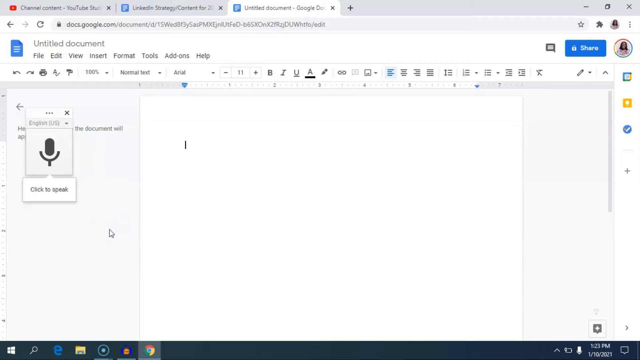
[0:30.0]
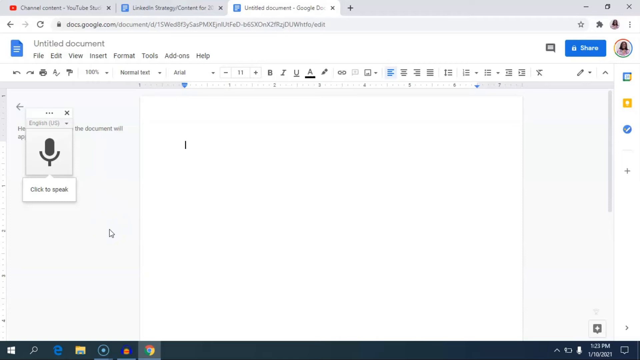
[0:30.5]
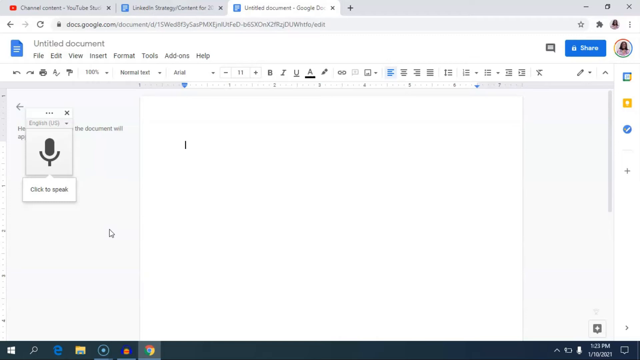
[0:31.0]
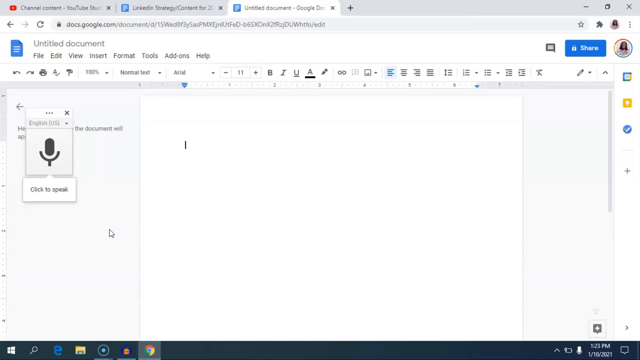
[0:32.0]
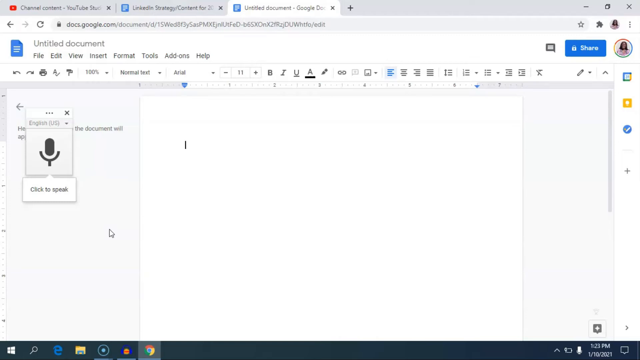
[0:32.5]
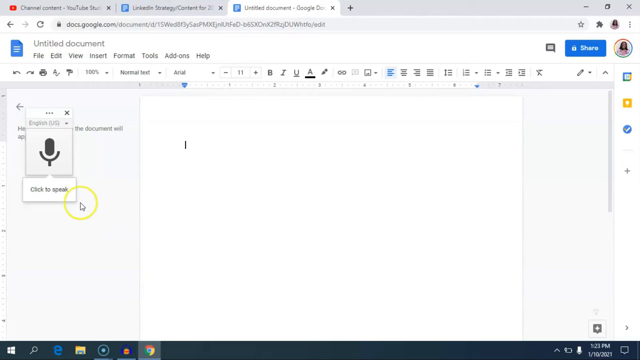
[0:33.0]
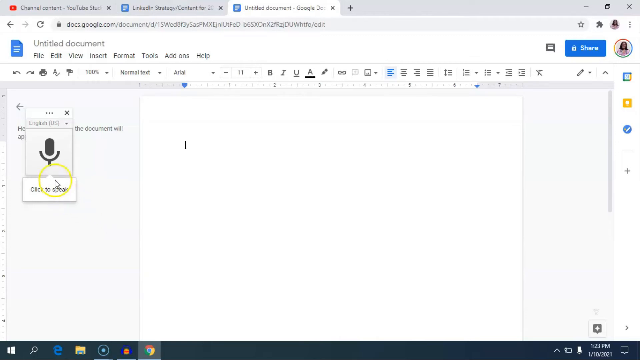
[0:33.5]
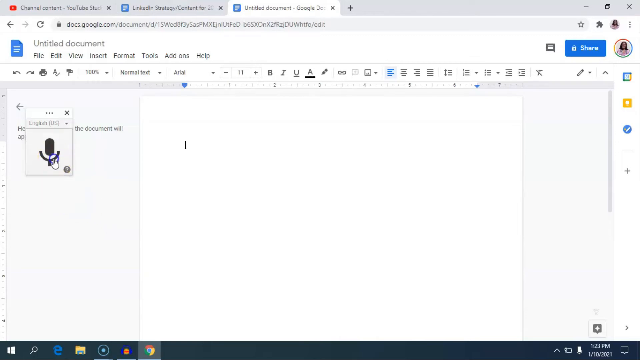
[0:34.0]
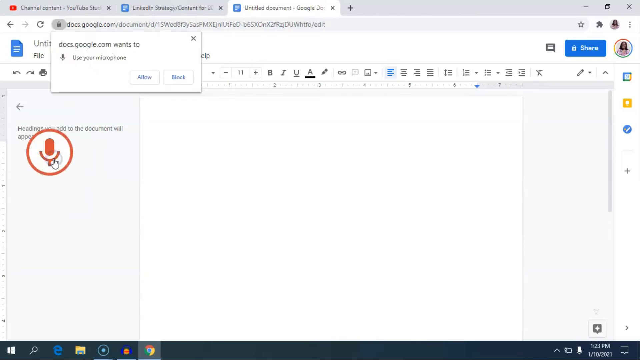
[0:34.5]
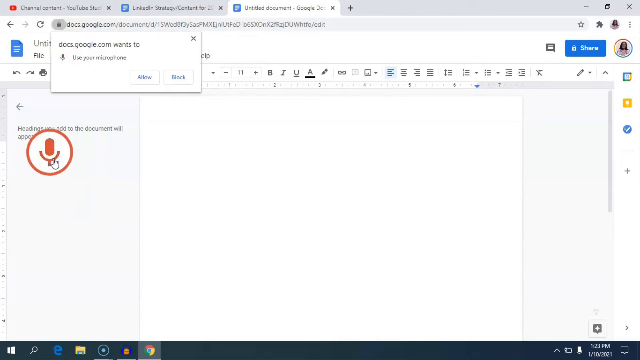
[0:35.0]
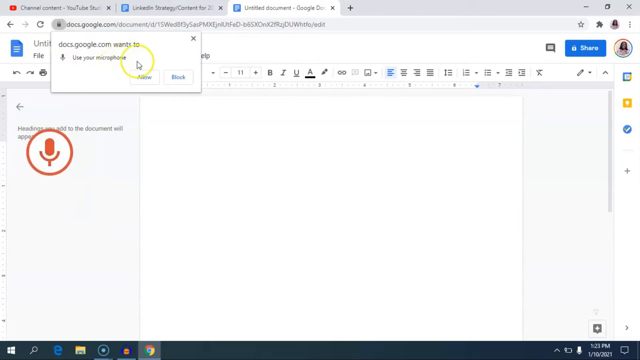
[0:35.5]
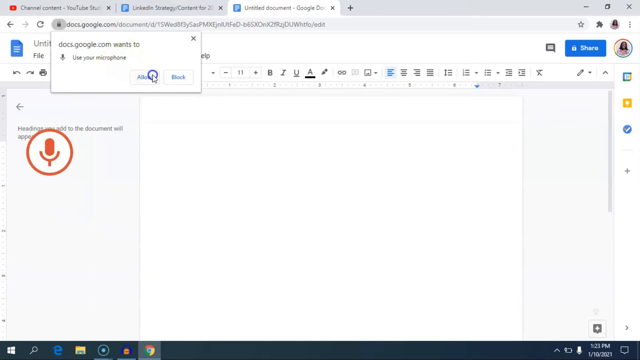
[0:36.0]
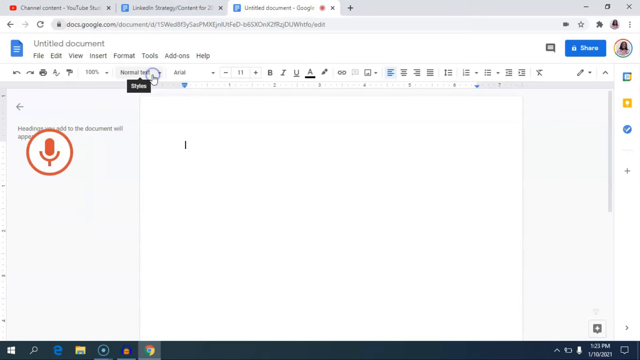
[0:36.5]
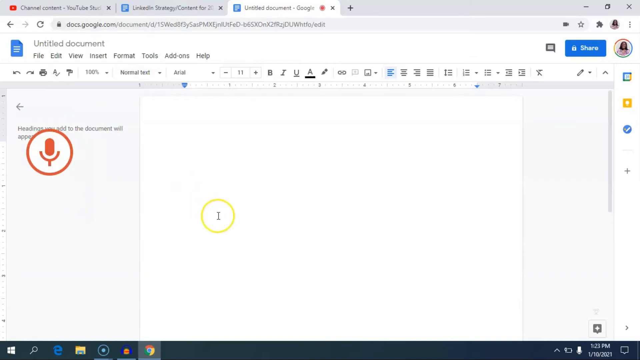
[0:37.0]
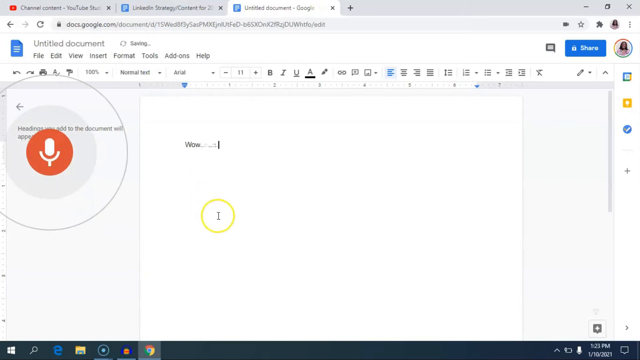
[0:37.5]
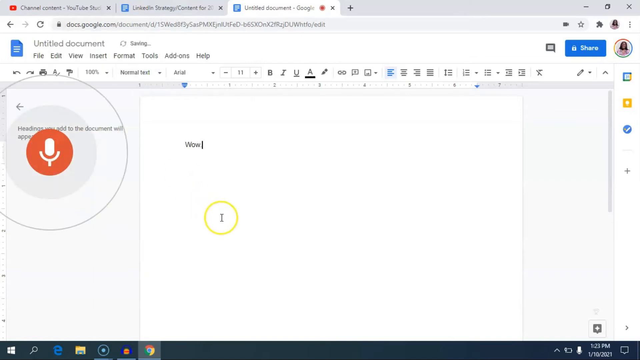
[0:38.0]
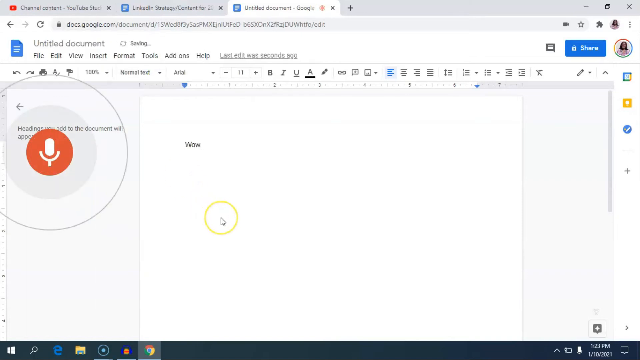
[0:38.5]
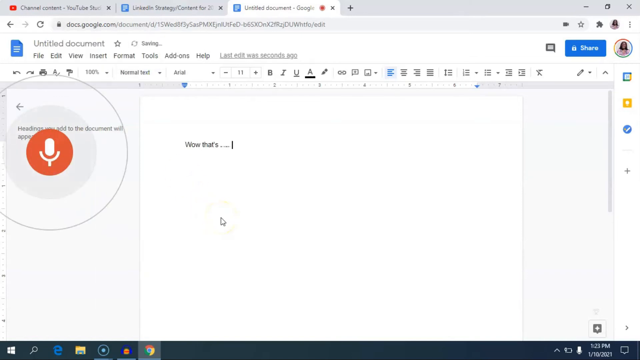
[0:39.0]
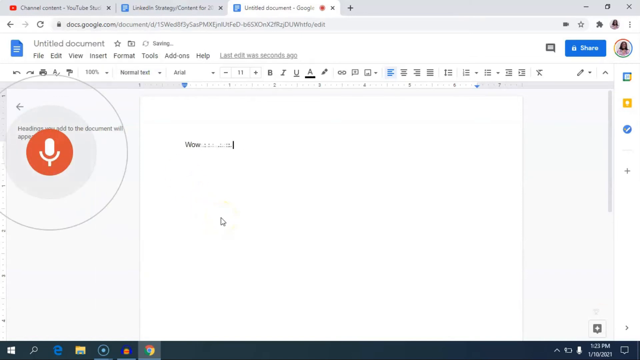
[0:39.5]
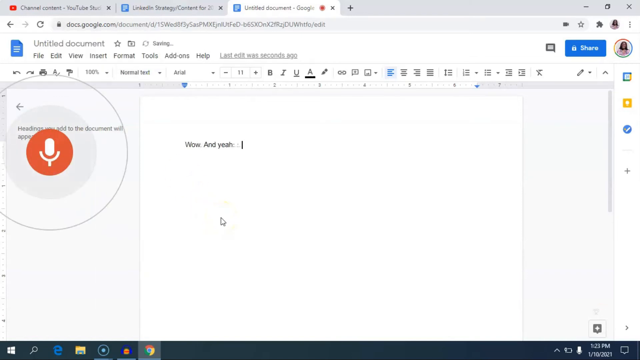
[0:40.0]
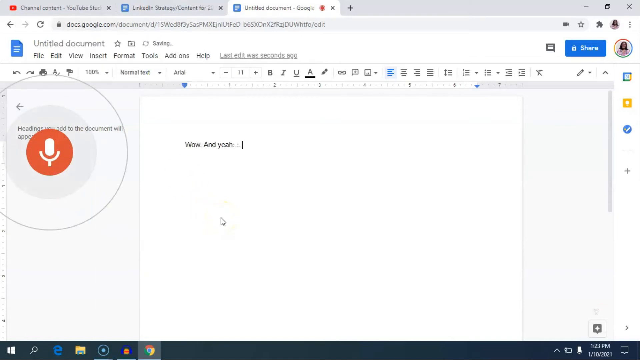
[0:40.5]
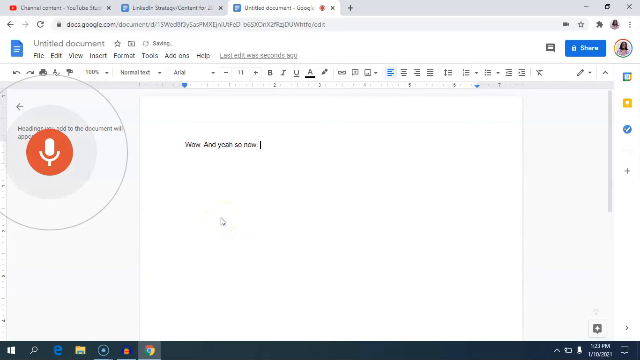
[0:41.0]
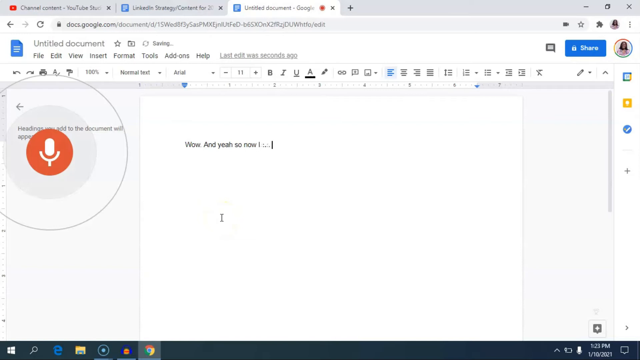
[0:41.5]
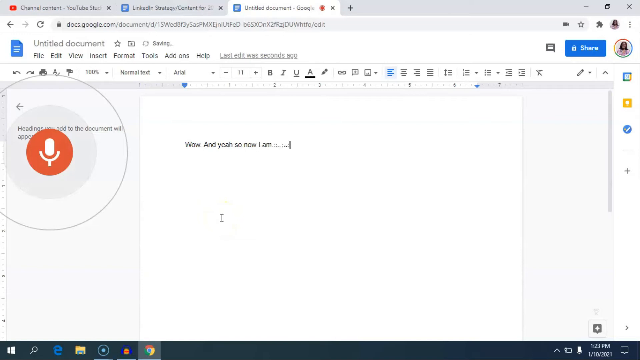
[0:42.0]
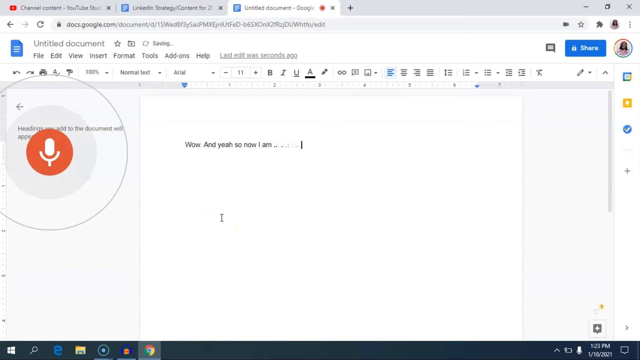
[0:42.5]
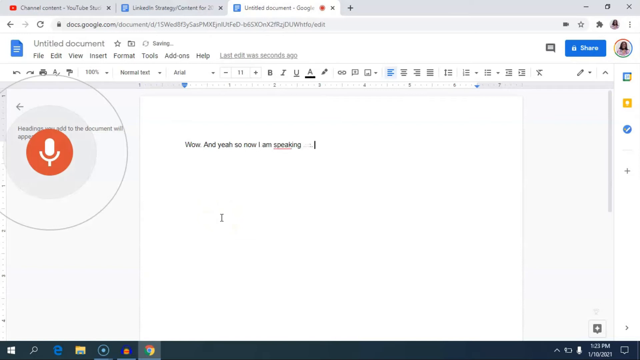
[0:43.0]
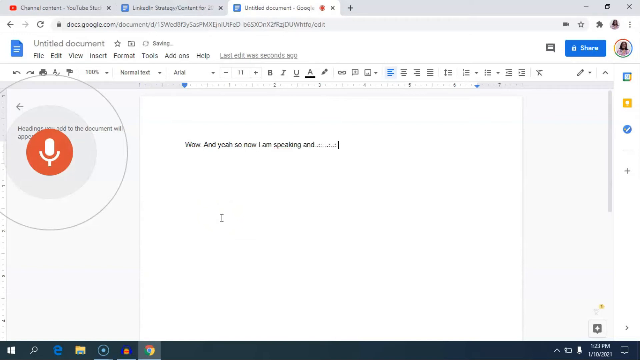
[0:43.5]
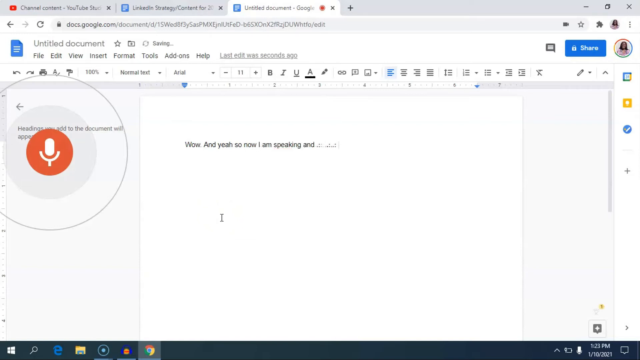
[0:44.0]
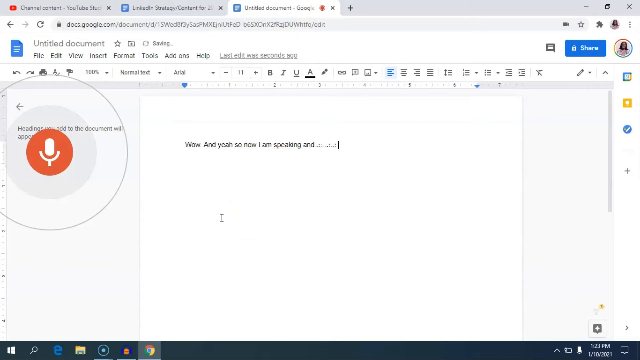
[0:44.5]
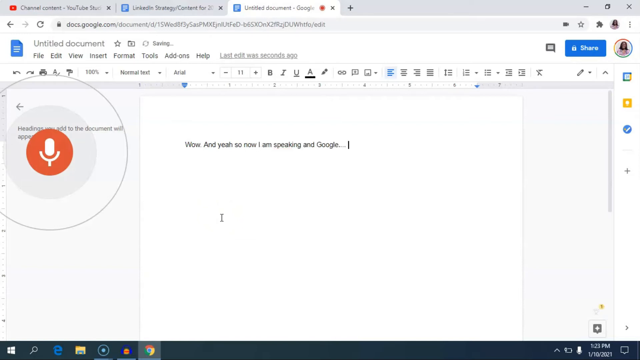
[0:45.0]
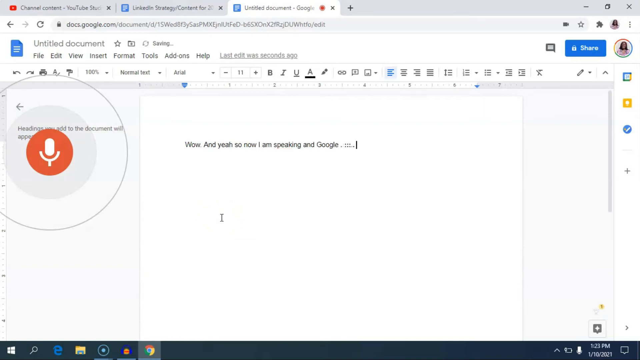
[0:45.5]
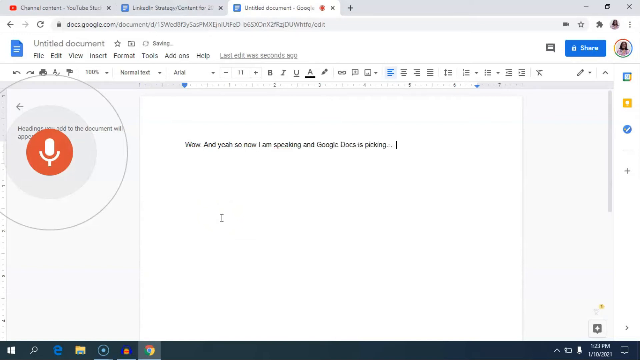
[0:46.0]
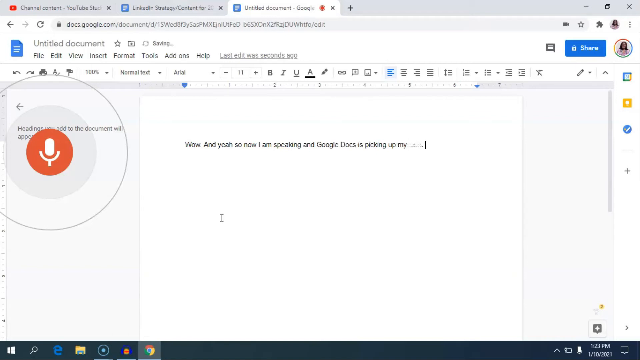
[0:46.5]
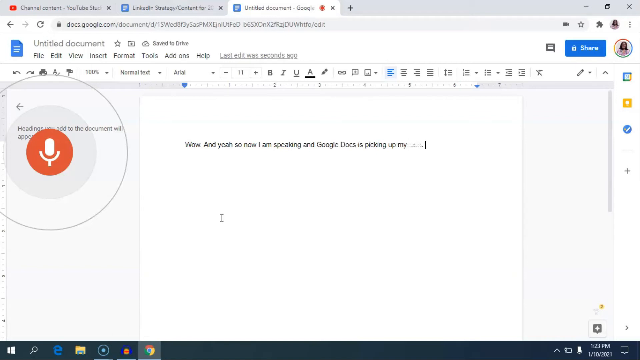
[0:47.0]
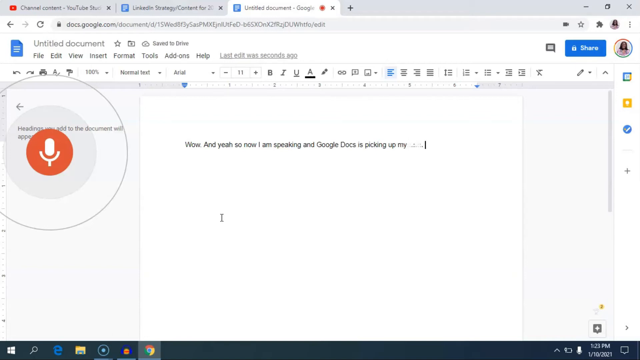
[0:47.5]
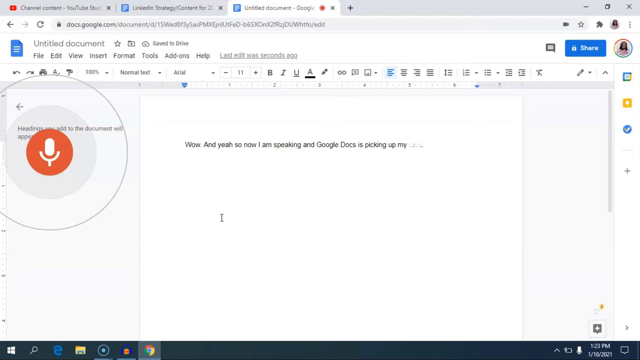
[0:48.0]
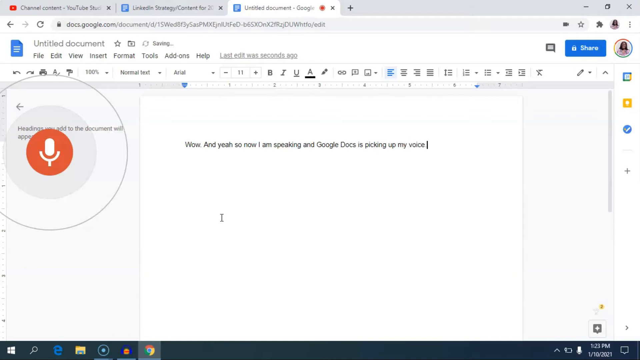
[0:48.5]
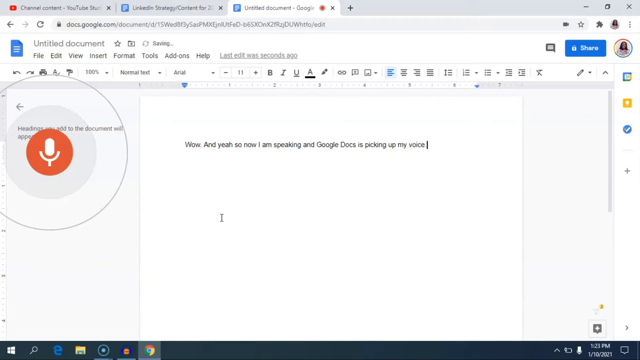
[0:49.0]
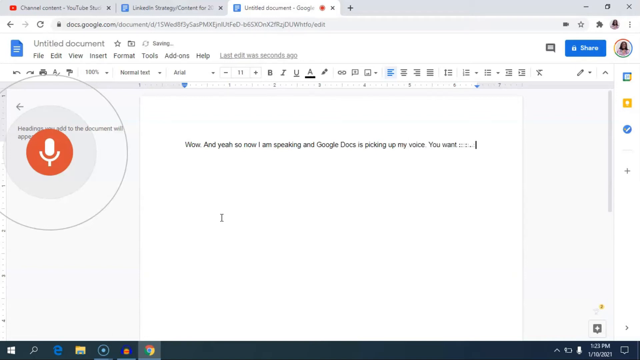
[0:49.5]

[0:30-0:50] The person continues using the Google Doc page. Partway through, the cursor goes over the microphone icon still on the left of the screen and clicks it. A notification pops up at the top left saying "docs.google.com wants to use your microphone", with options to allow and block, and the person clicks Allow. She then apparently speaks into the microphone, and the document prints out what she is saying, with text such as "wow" and "yeah", then "So now I am speaking, and Google Docs is picking up my voice. You want to", followed by more text.